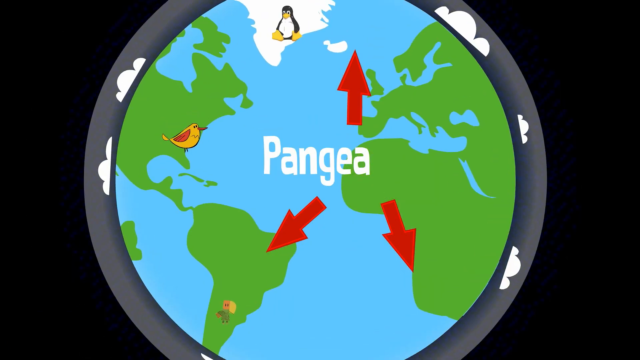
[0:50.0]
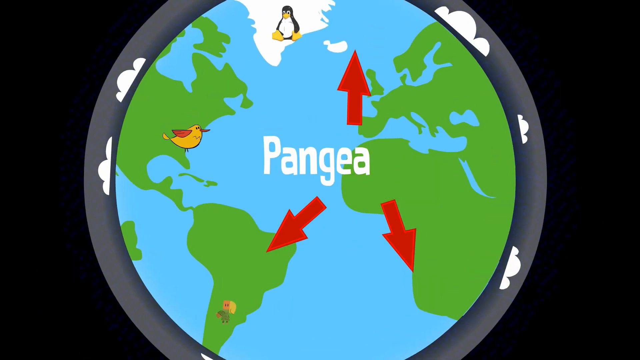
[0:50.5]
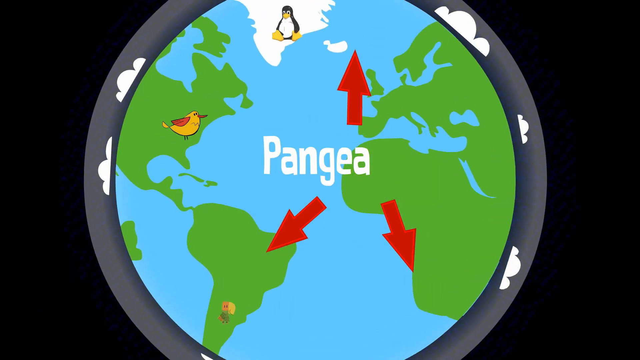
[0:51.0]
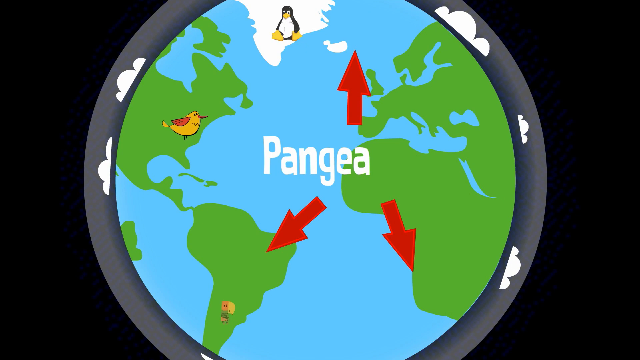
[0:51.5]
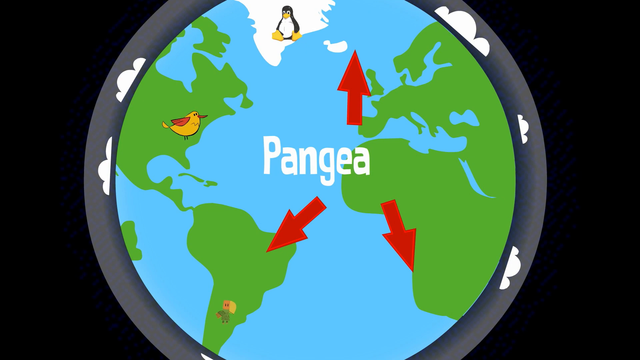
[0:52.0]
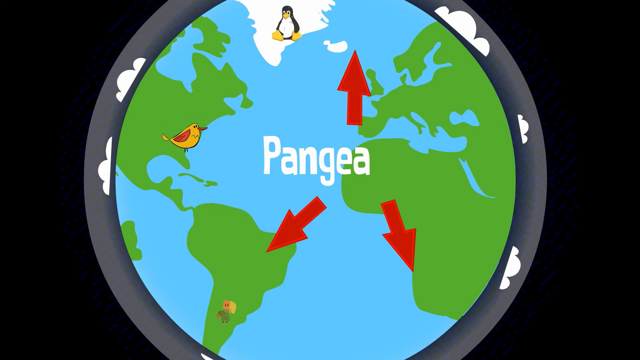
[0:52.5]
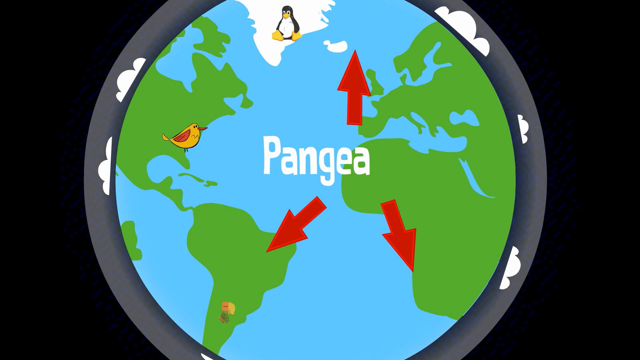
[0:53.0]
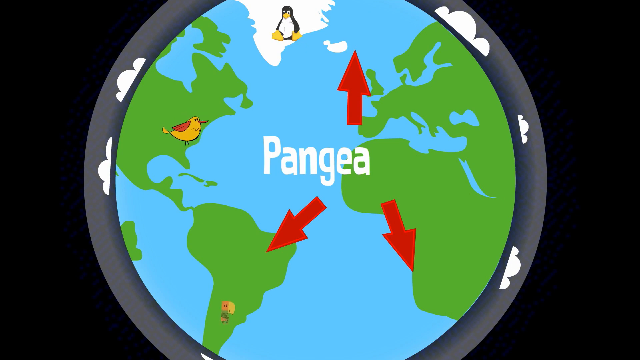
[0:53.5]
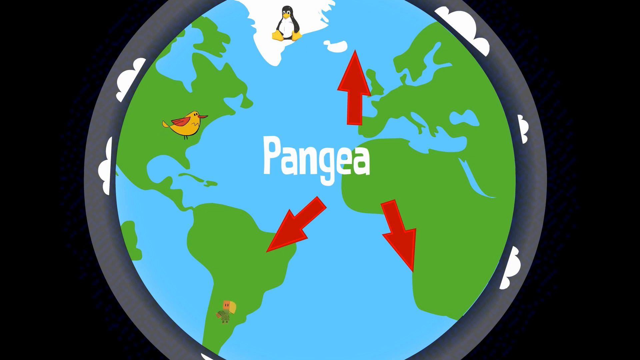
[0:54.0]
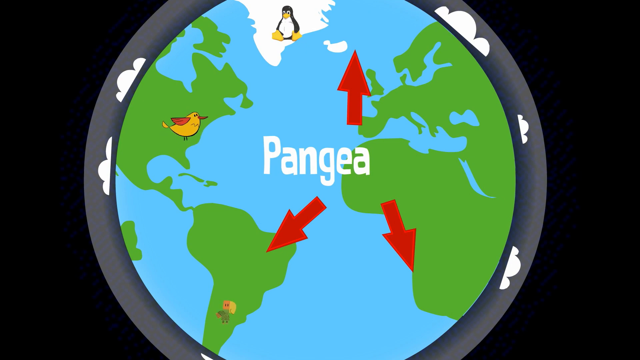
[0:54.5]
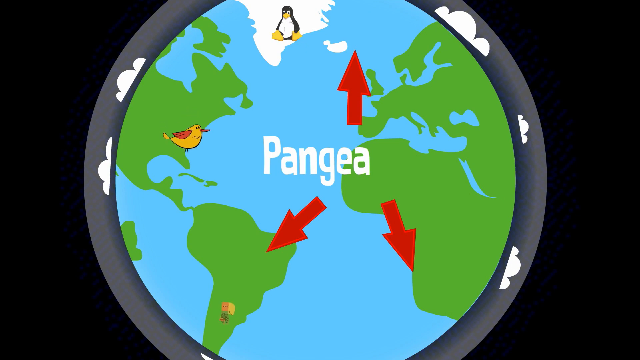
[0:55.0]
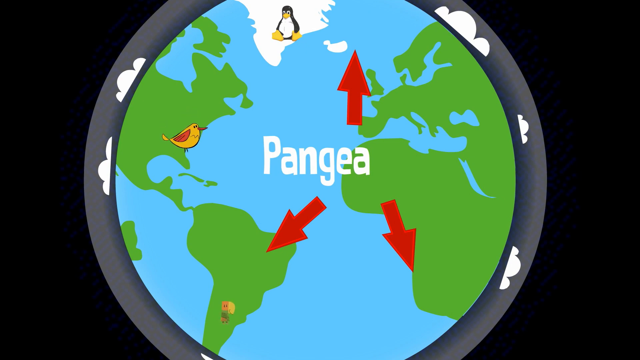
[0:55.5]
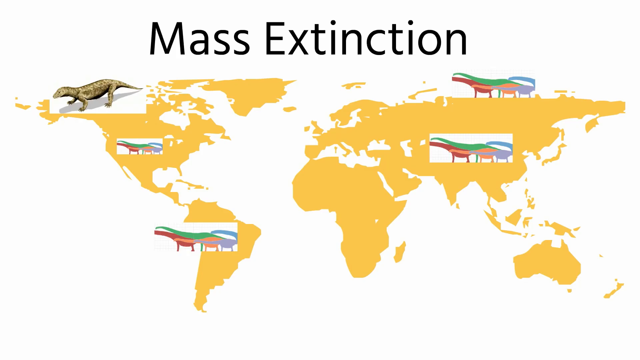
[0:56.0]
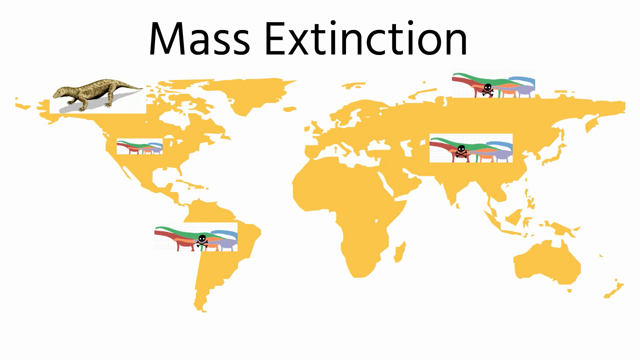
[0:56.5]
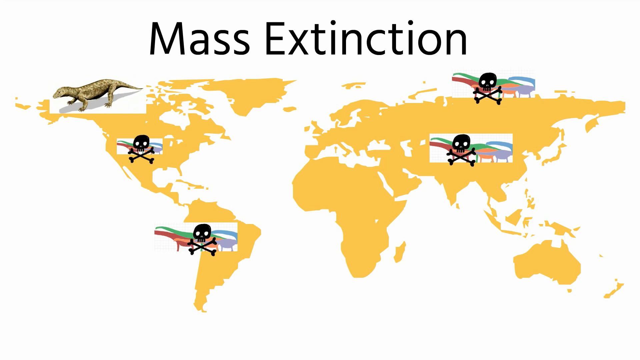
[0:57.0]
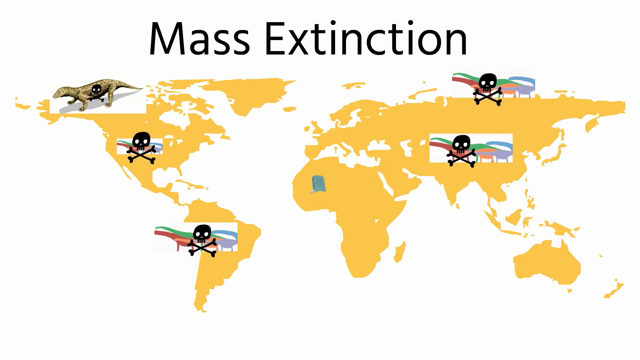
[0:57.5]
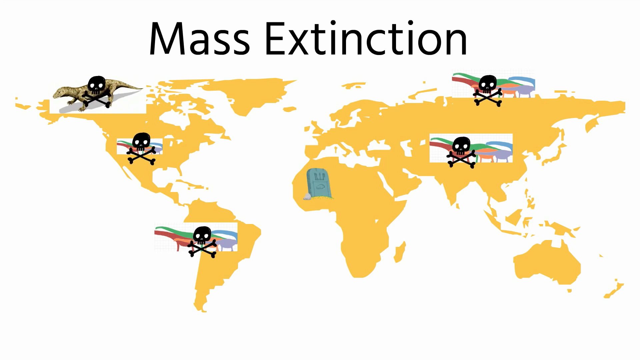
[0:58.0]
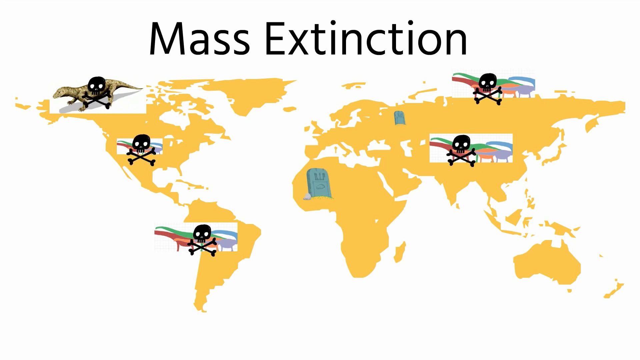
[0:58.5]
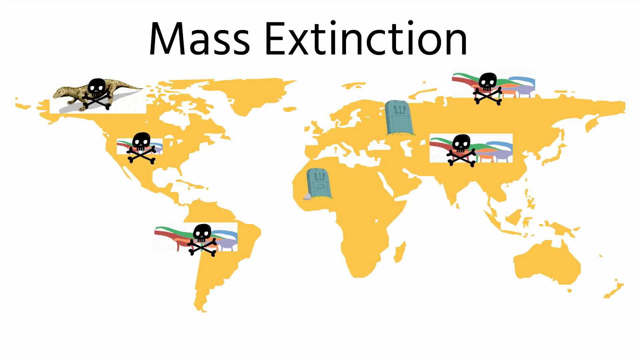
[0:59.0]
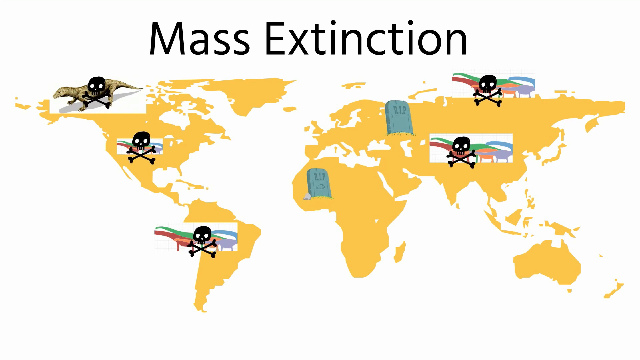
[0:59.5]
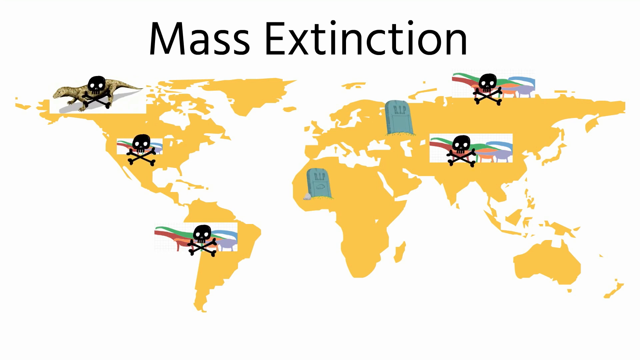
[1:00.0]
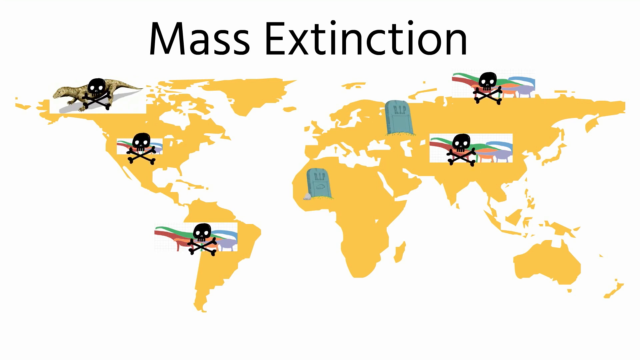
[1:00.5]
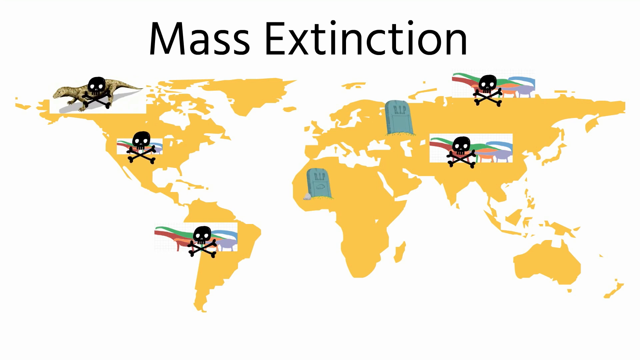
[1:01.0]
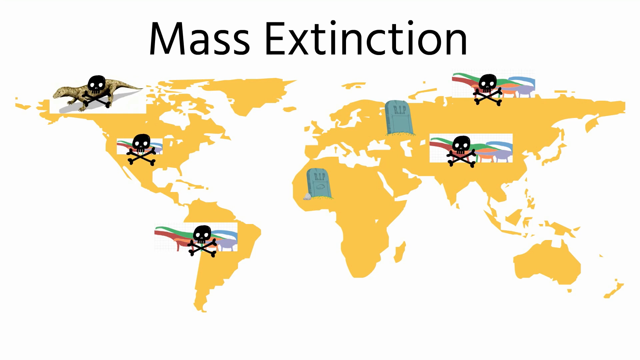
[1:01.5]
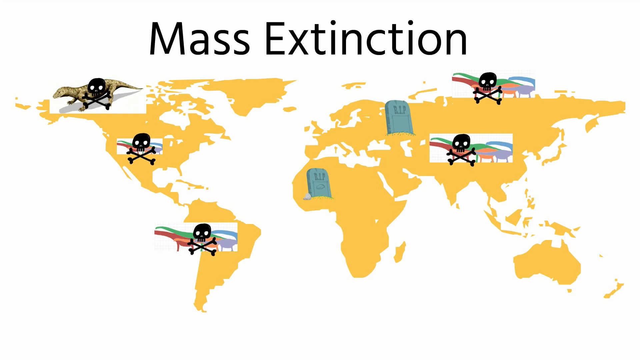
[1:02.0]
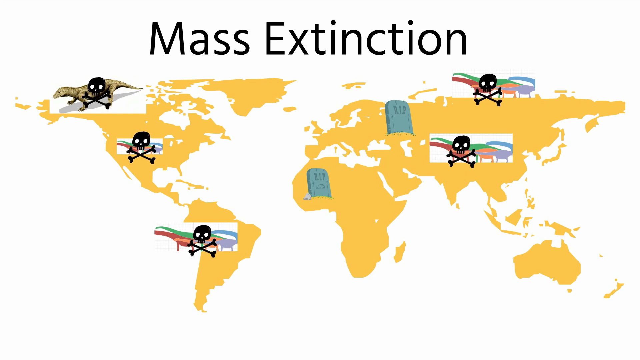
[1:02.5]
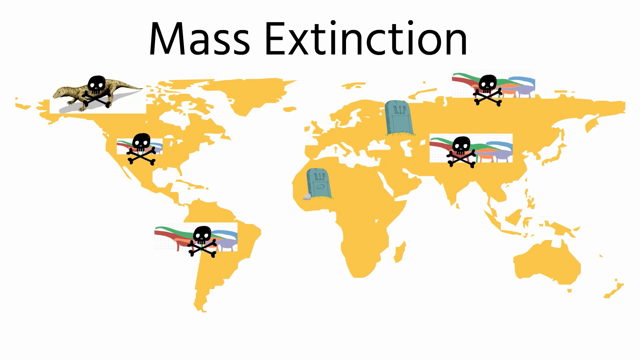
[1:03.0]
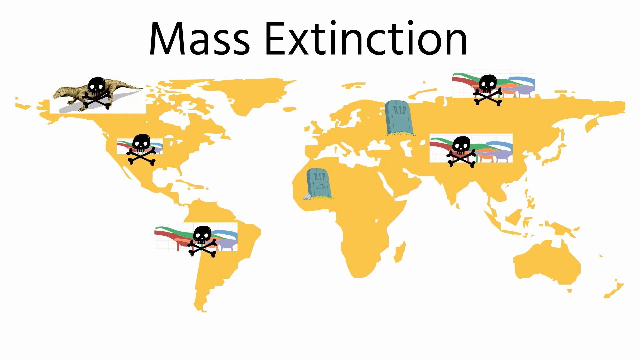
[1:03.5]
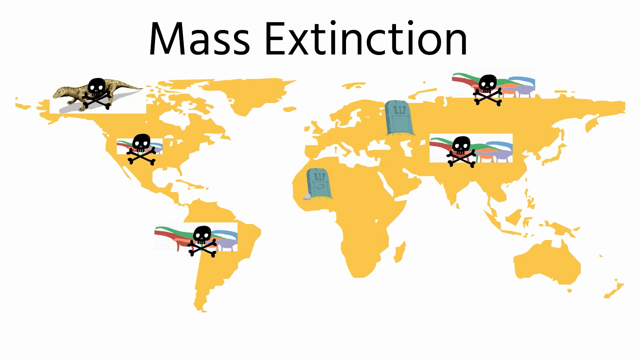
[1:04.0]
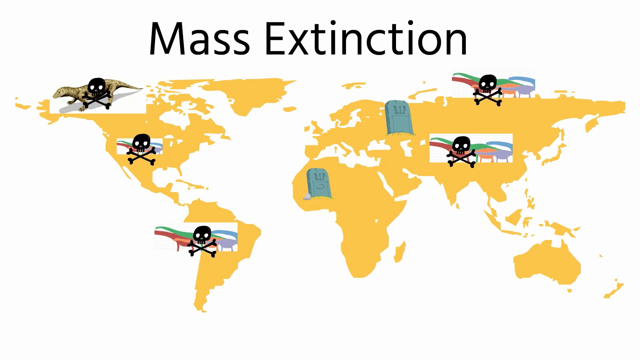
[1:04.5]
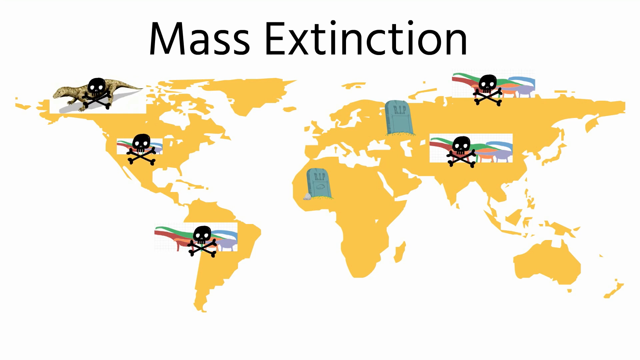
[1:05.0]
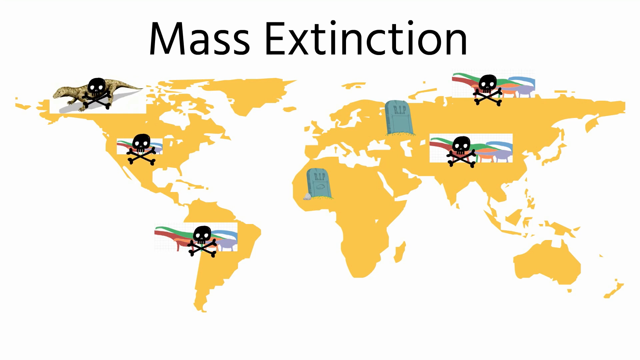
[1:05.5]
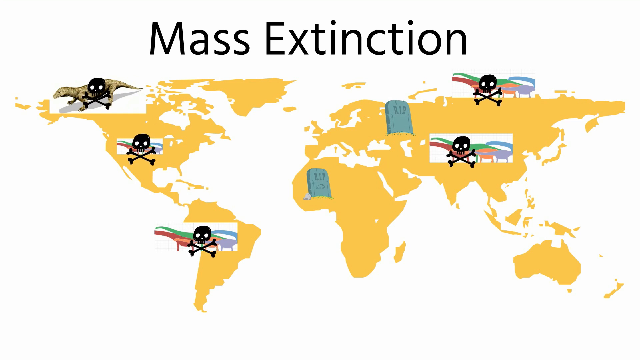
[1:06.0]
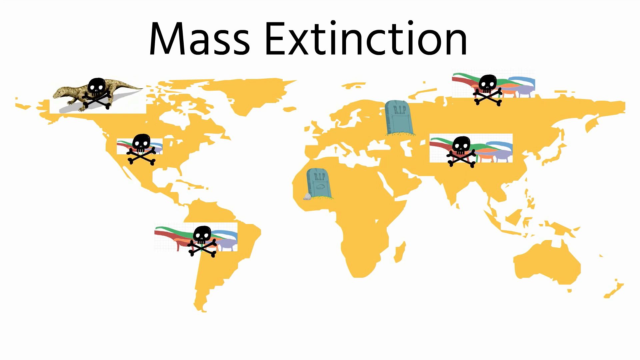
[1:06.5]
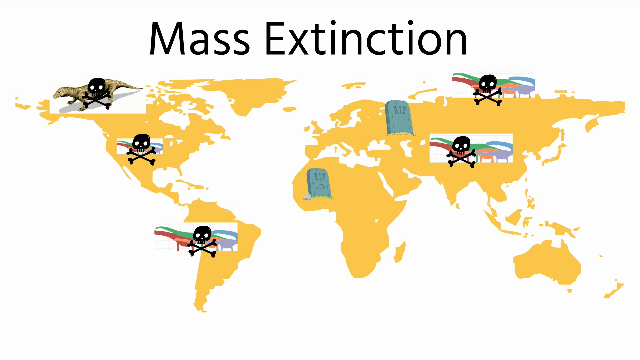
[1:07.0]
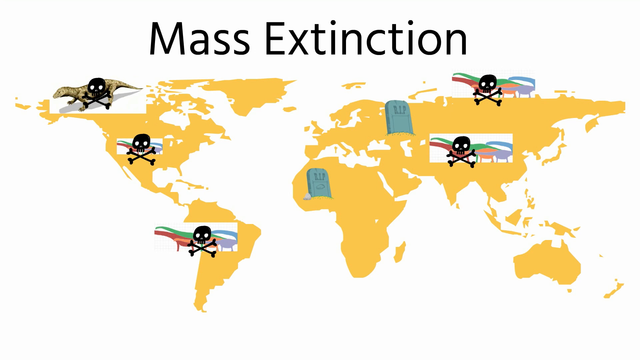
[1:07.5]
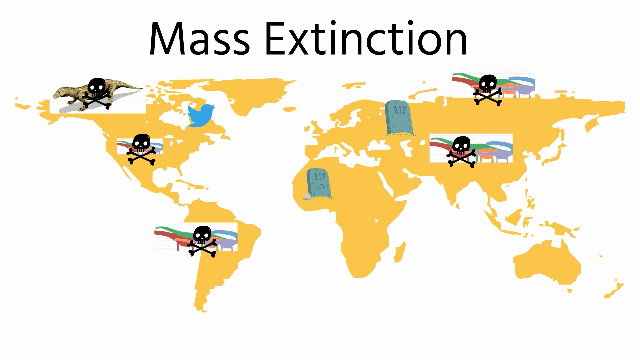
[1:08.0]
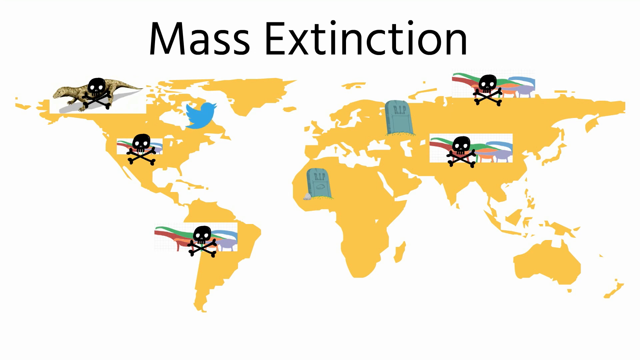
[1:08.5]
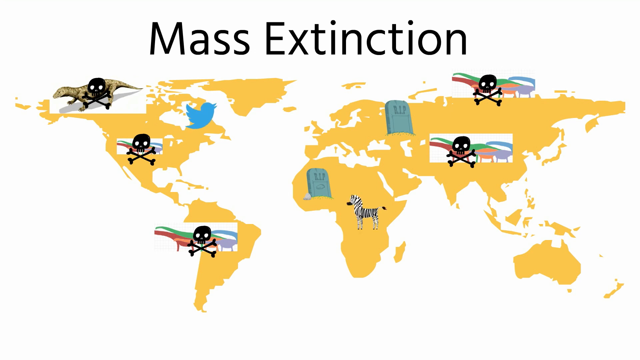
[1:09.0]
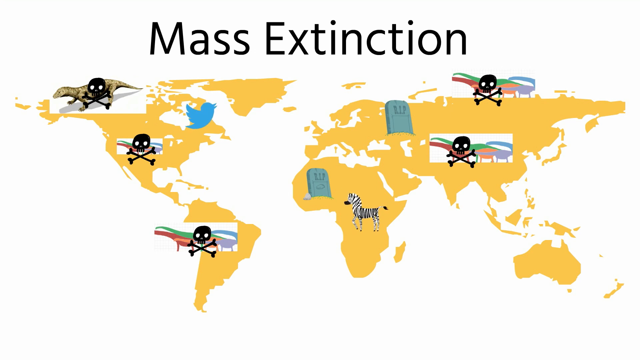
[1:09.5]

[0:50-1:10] The continents continue separating from one another. Antarctica has a little penguin, the penguin from Linux; North America has some kind of bird, and South America has a different kind of bird. Many clouds surround the globe. The little birds sort of dance. The planet goes through some kind of mass extinction: the globe changes into a map of the planet on which many dinosaur species seem to have disappeared or gone extinct in different places, including Canada, North America, South America, Europe, Asia and Africa. Then the Twitter logo suddenly appears, along with a zebra in South Africa.